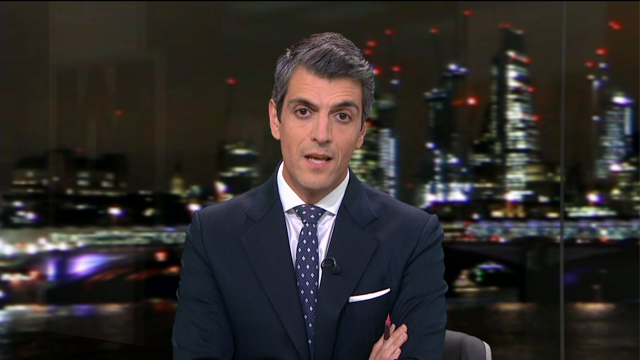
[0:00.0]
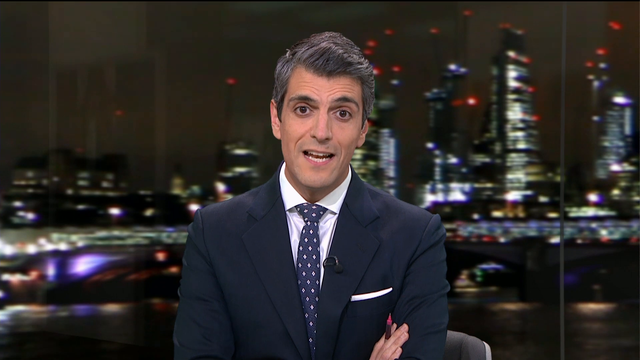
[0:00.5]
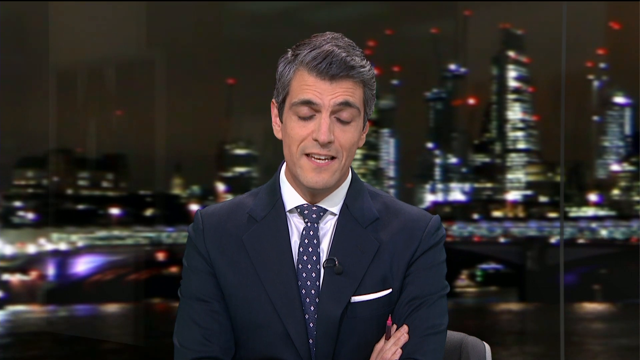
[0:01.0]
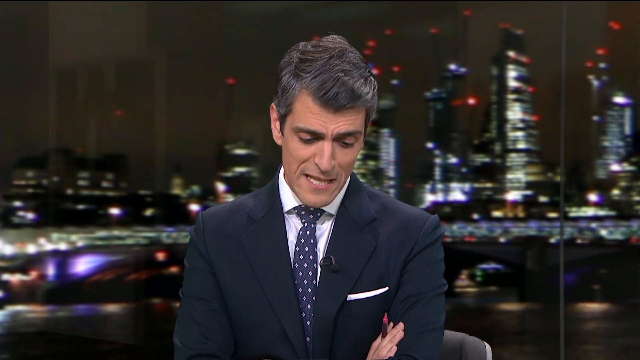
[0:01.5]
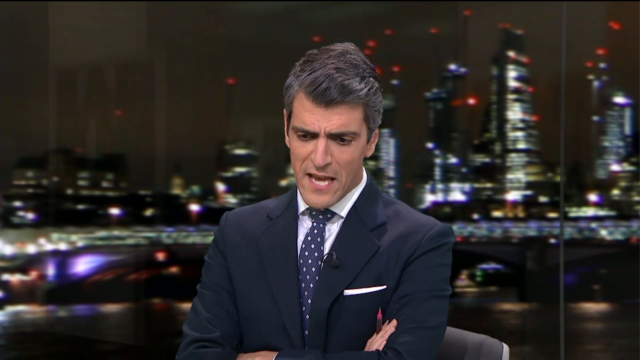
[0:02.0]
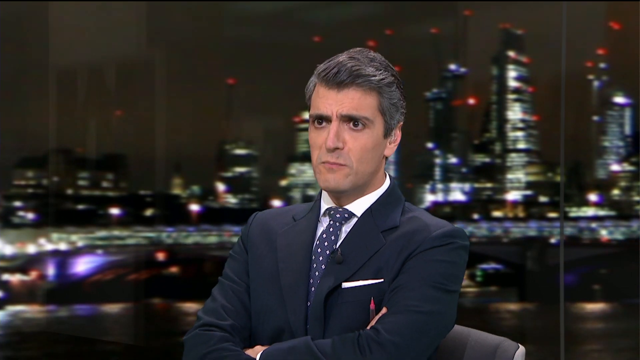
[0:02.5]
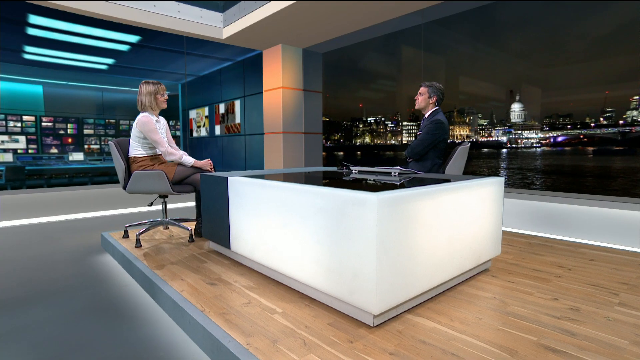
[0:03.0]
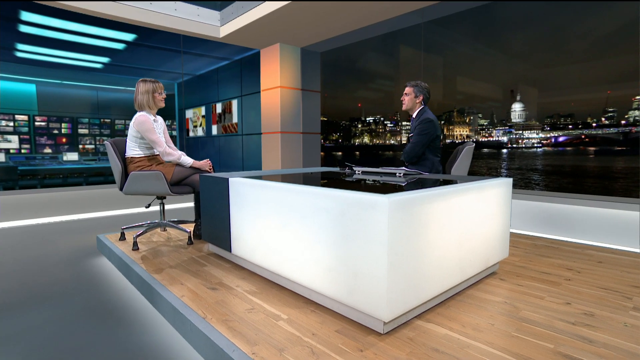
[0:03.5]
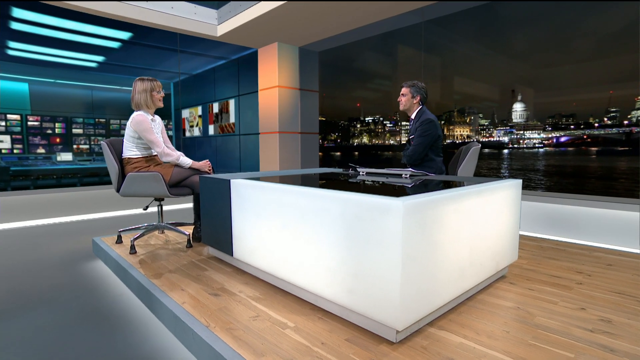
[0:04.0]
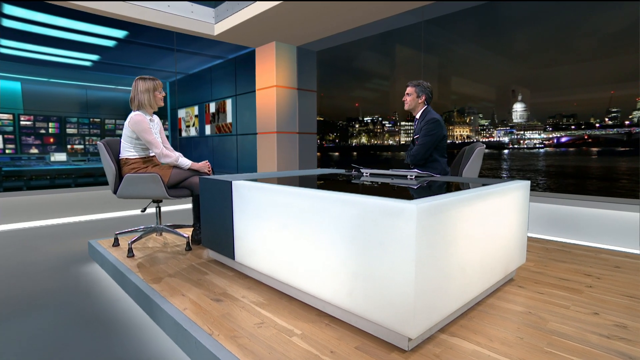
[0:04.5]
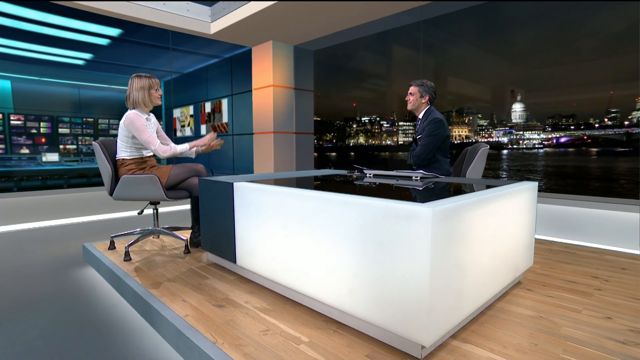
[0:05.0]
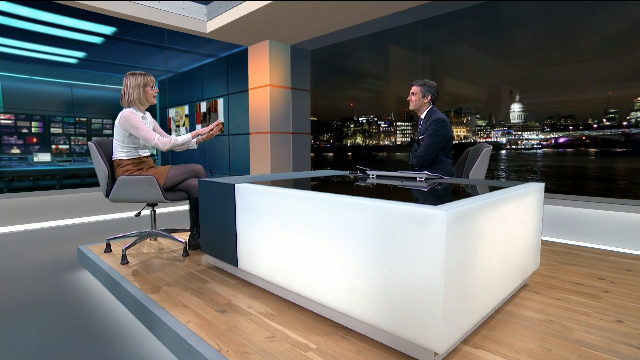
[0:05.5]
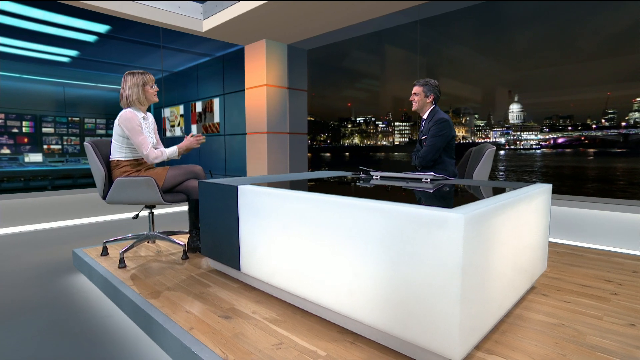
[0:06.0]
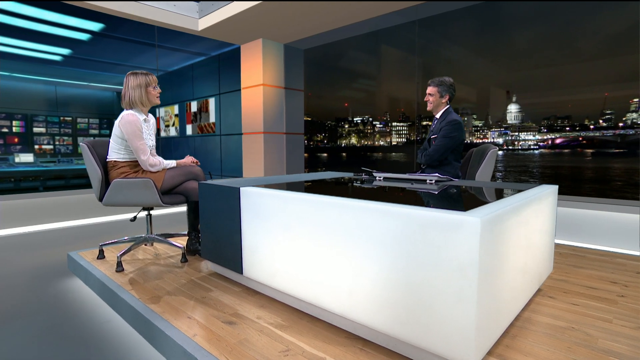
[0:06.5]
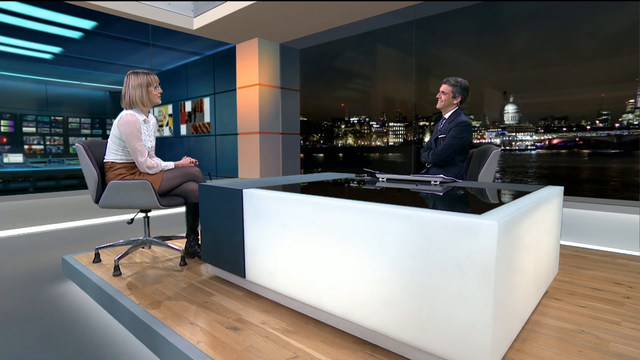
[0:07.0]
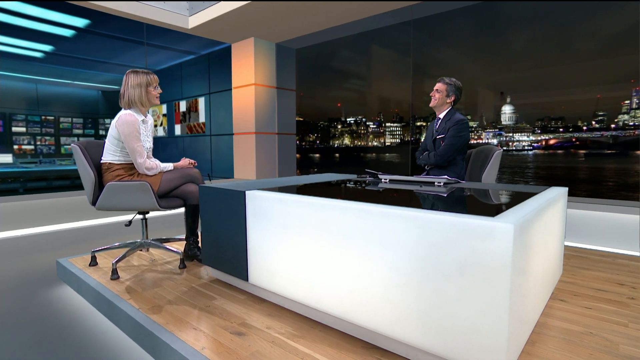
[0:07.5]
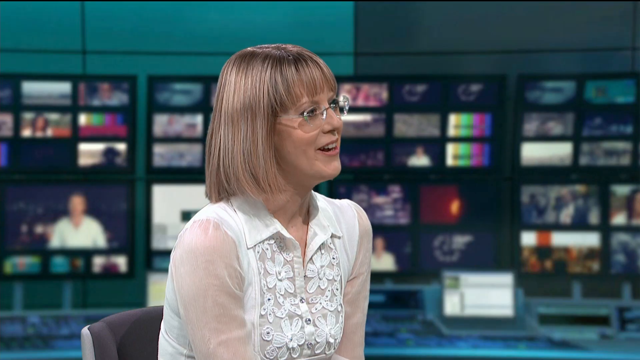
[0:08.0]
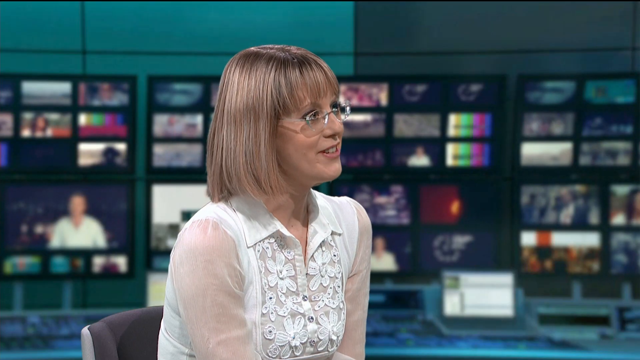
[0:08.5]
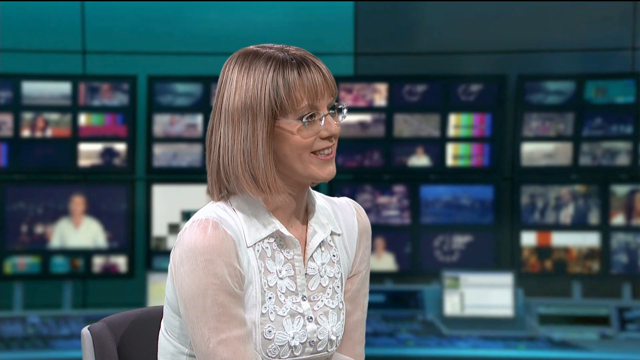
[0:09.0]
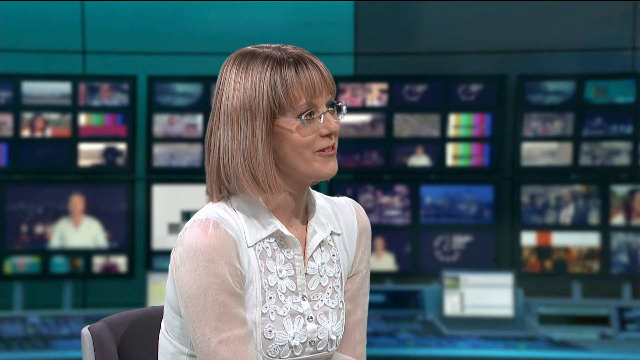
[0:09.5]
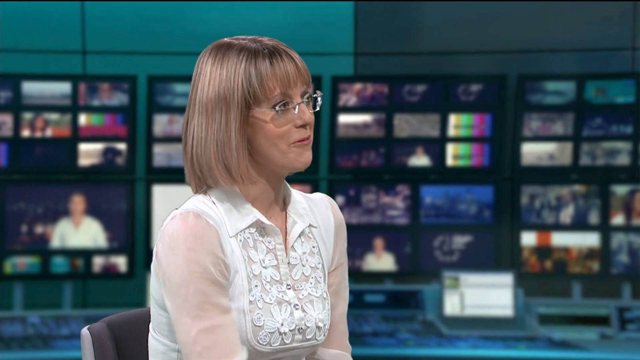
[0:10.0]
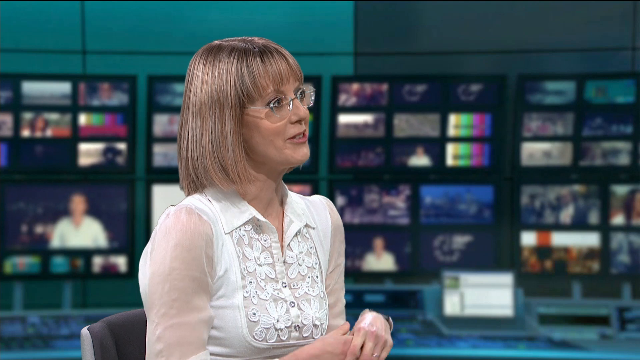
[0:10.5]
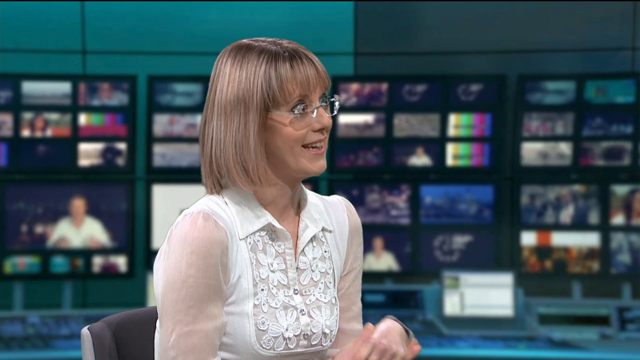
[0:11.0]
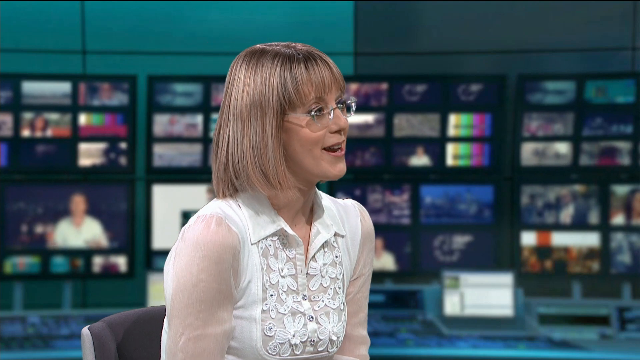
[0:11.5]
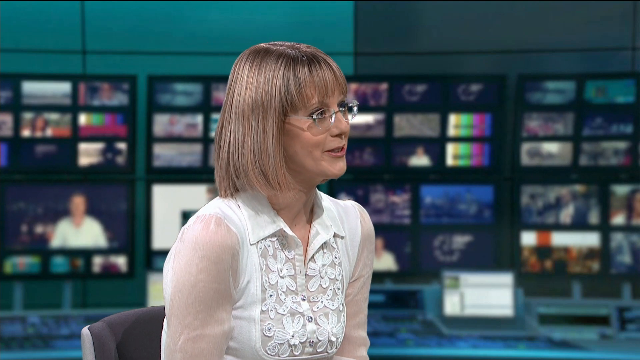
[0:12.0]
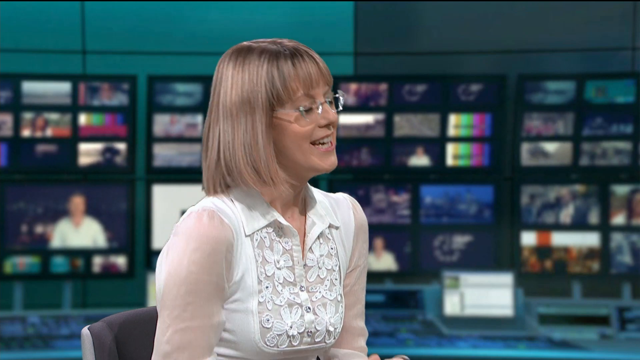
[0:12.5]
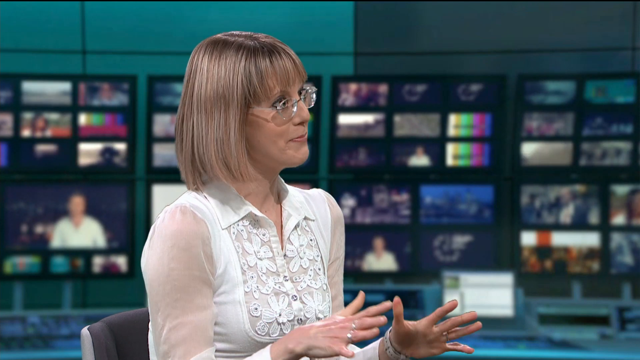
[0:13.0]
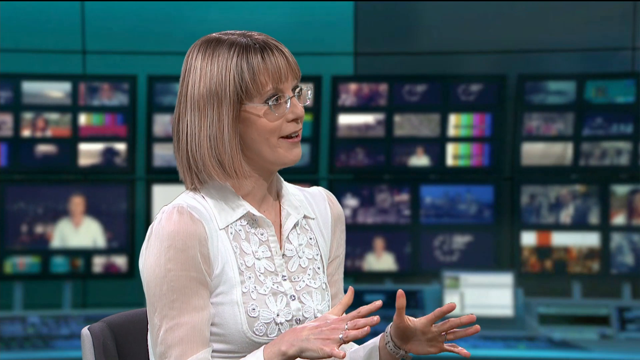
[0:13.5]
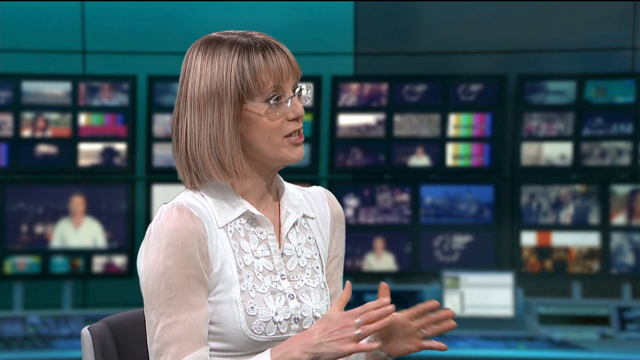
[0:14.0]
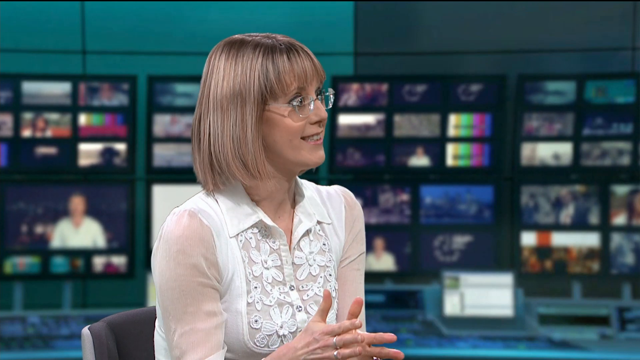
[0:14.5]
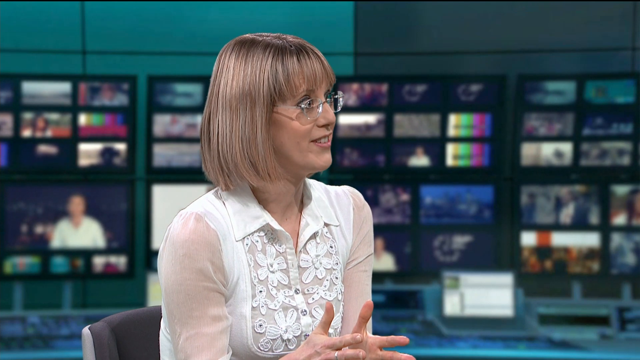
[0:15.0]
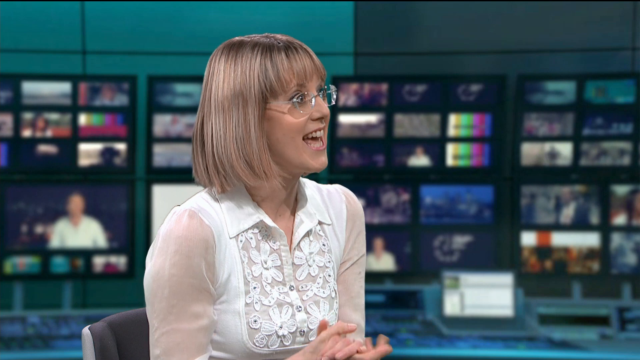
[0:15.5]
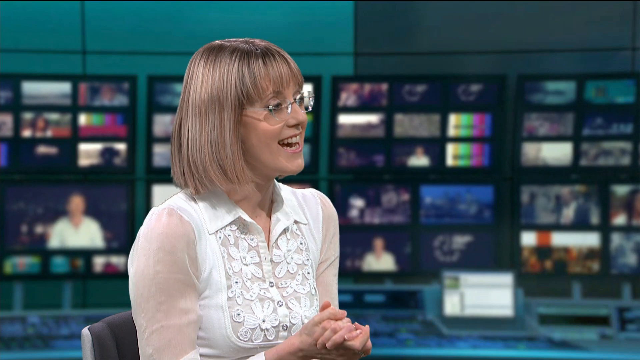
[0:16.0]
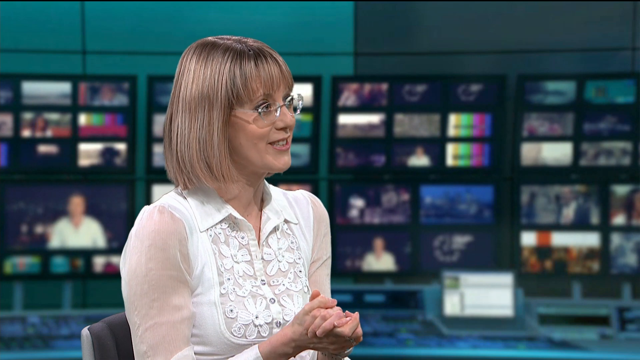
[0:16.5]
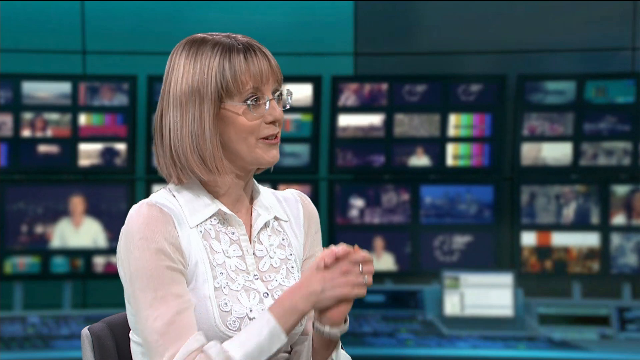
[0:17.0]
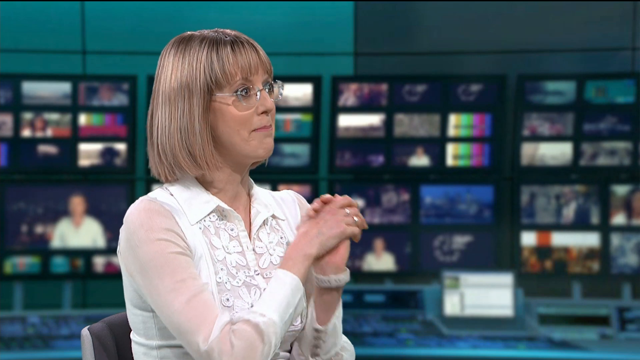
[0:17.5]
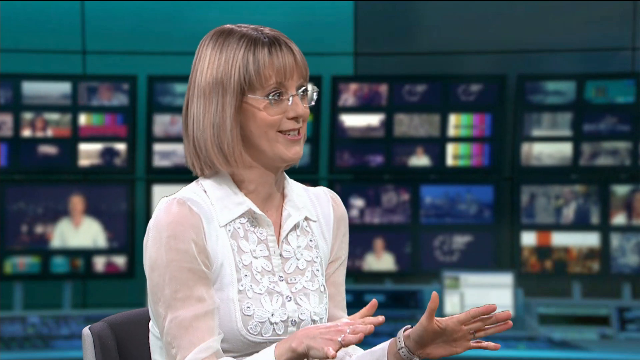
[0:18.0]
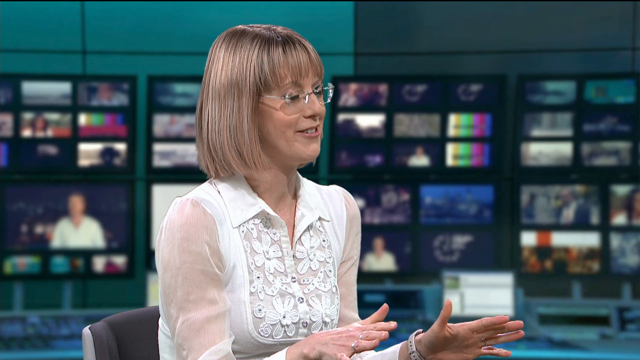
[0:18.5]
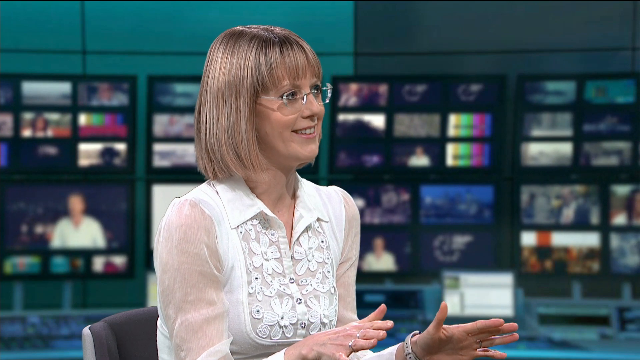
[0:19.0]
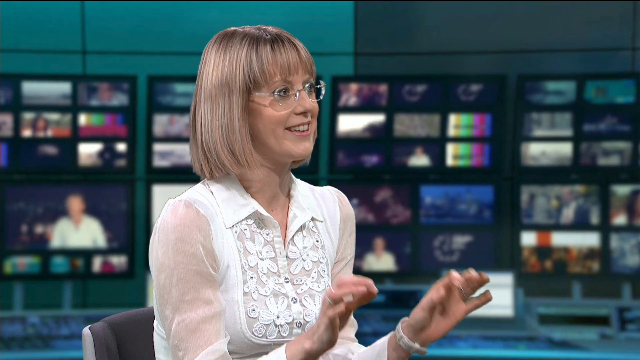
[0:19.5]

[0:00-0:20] A male news reporter wears a suit and a blue tie, with a microphone clipped to his blazer. Behind him it is nighttime, and the view looks like a big city, possibly New York, with a lot of skyscrapers and a lot of lights. He is at a desk, and a woman is at the desk with him, sitting in a chair. She has a short haircut and wears glasses, a white blouse, a brown skirt, stockings, boots and a watch on her left wrist. A bunch of monitors are behind her. She smiles a lot while she talks and talks with her hands. There are no words on the screen.